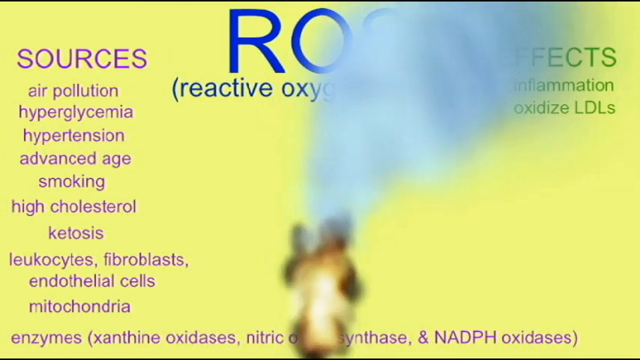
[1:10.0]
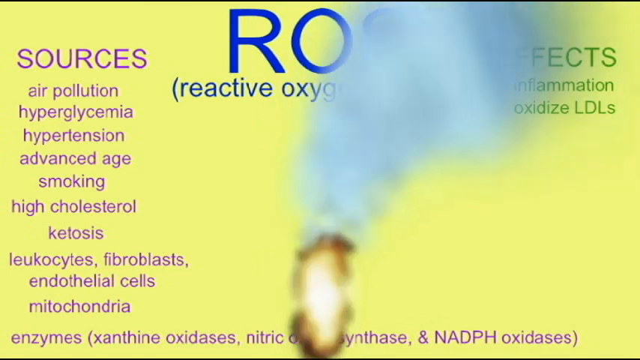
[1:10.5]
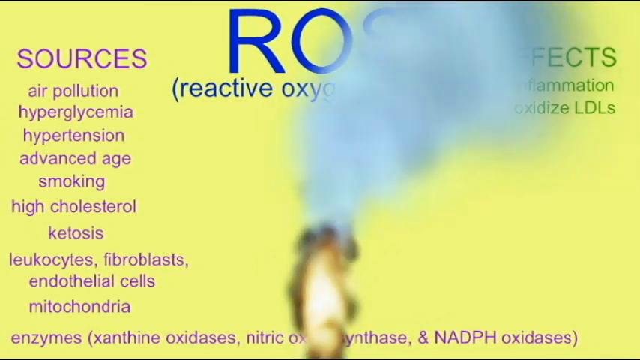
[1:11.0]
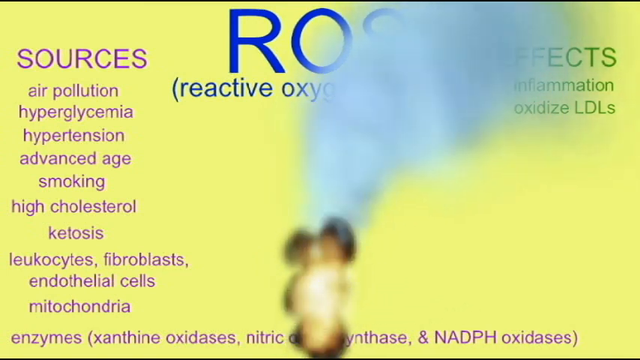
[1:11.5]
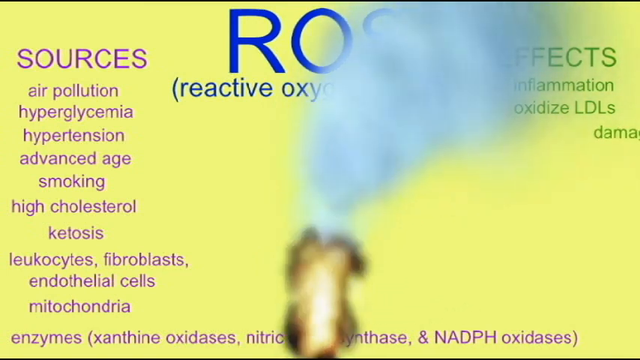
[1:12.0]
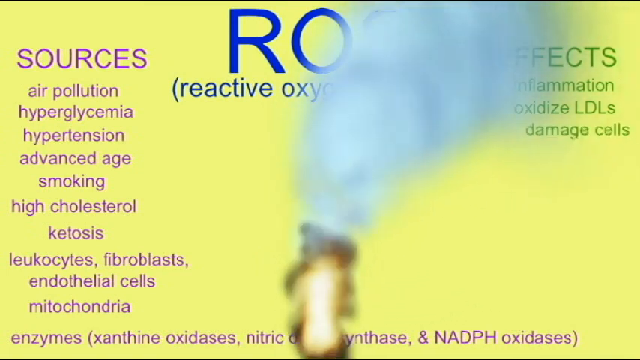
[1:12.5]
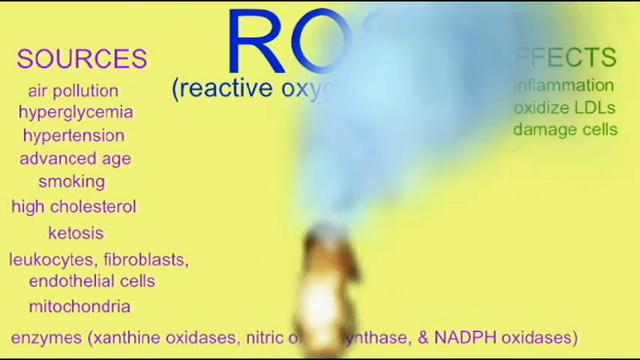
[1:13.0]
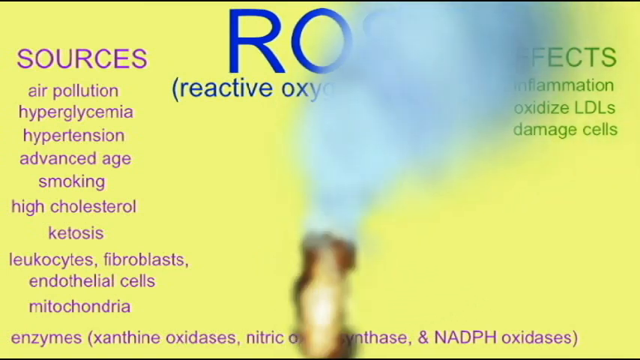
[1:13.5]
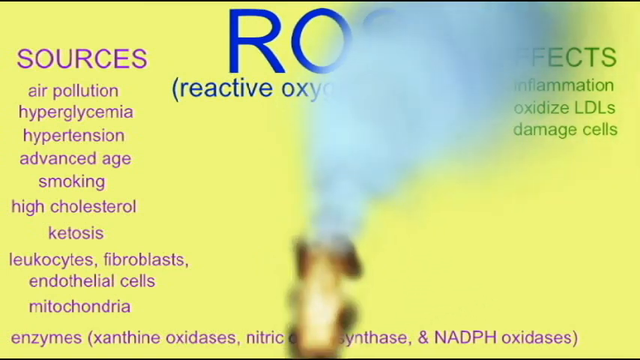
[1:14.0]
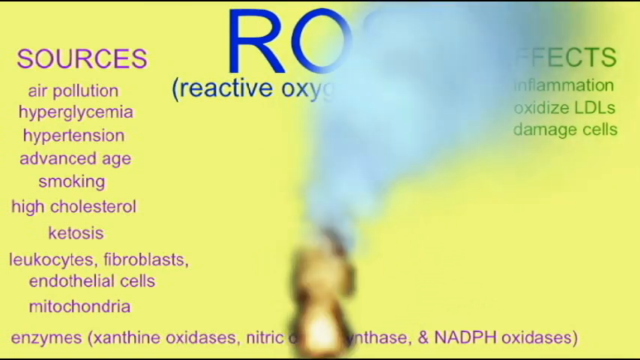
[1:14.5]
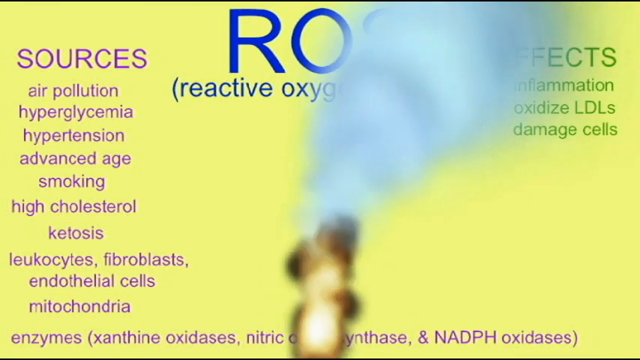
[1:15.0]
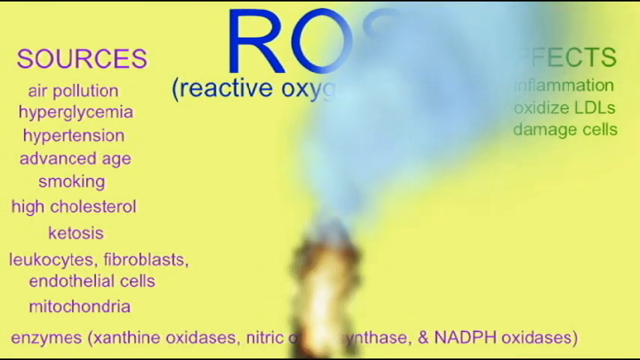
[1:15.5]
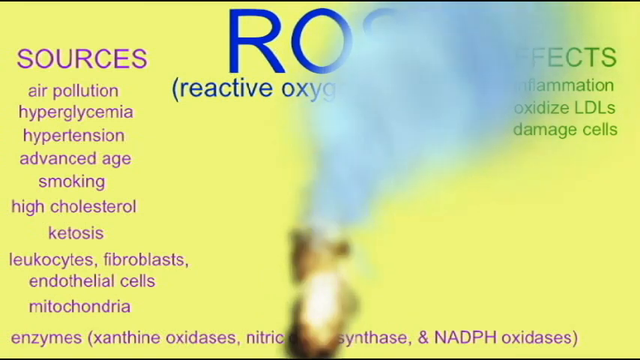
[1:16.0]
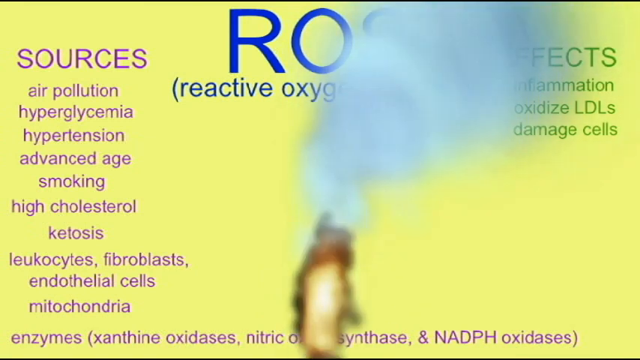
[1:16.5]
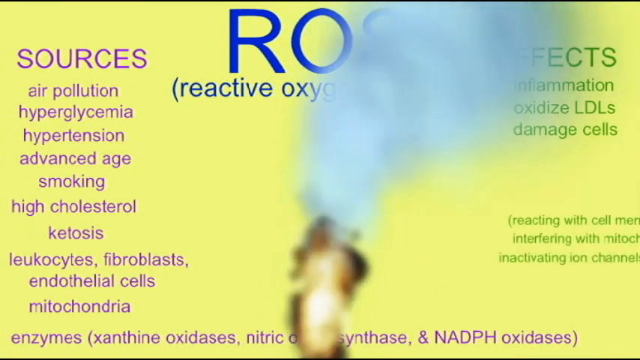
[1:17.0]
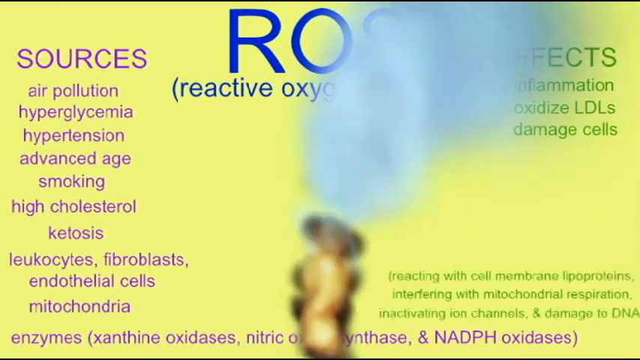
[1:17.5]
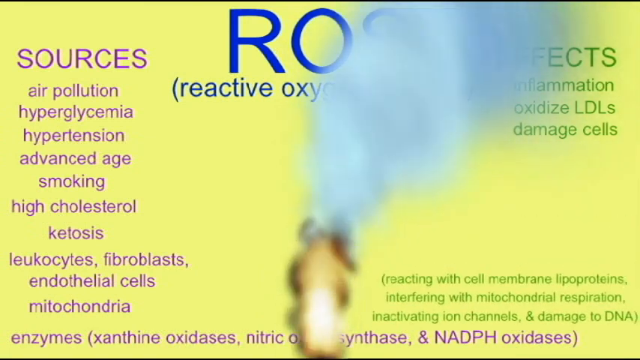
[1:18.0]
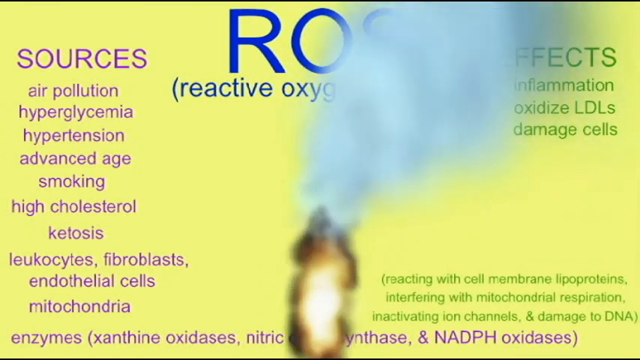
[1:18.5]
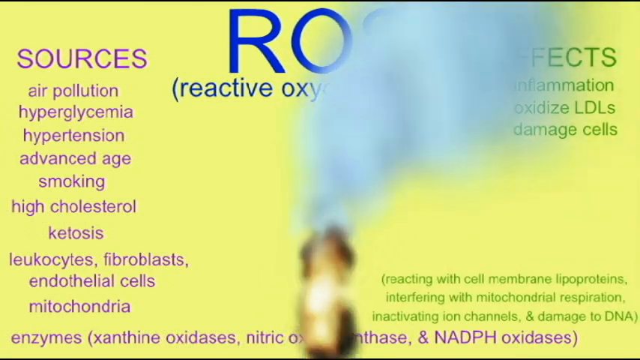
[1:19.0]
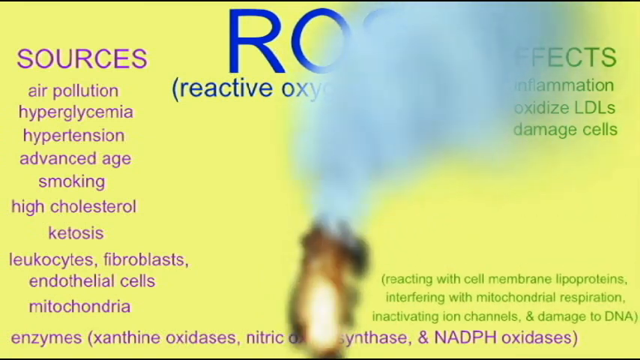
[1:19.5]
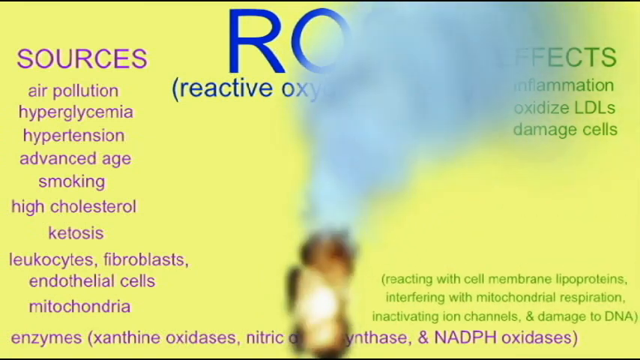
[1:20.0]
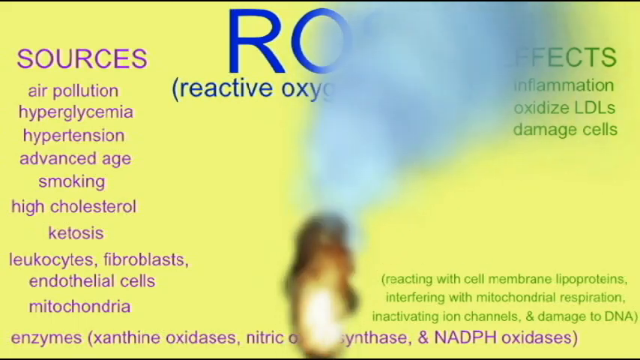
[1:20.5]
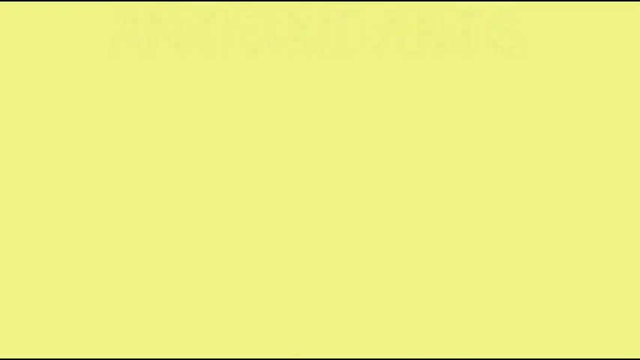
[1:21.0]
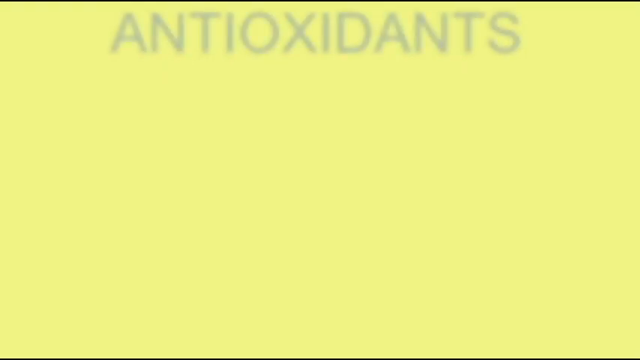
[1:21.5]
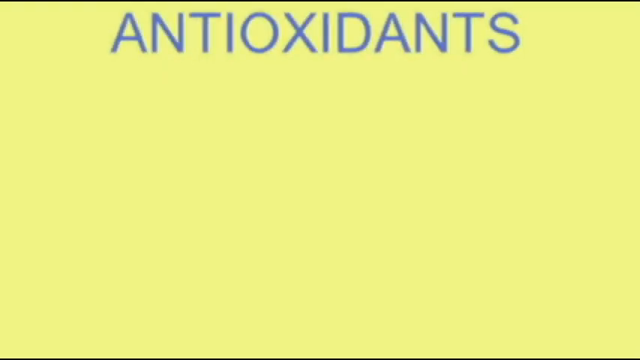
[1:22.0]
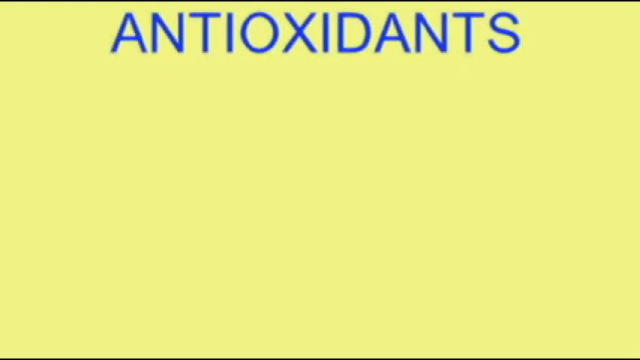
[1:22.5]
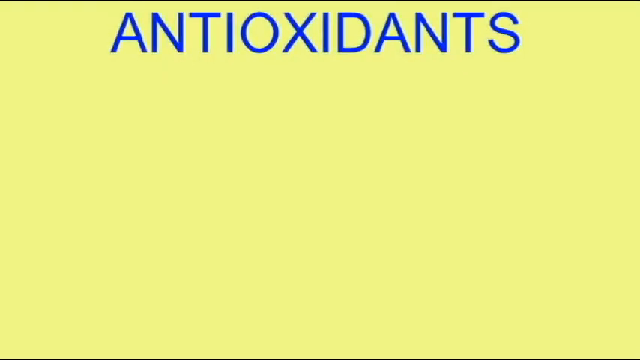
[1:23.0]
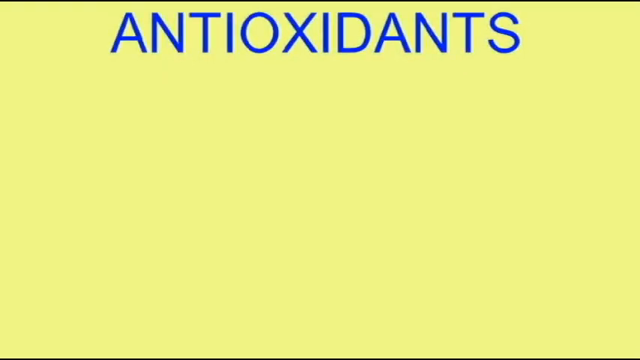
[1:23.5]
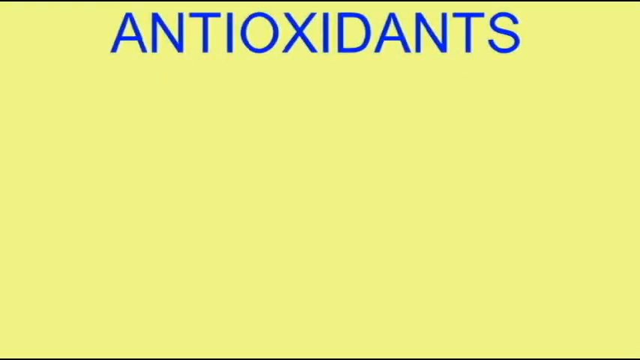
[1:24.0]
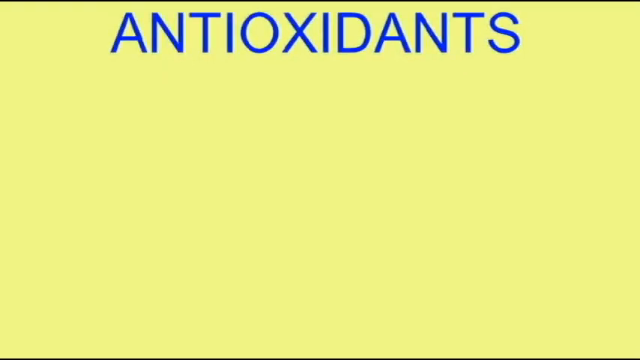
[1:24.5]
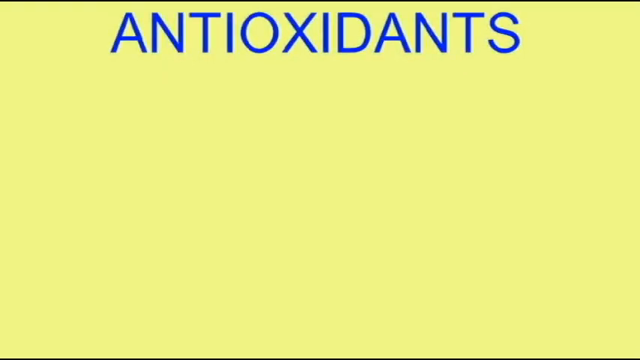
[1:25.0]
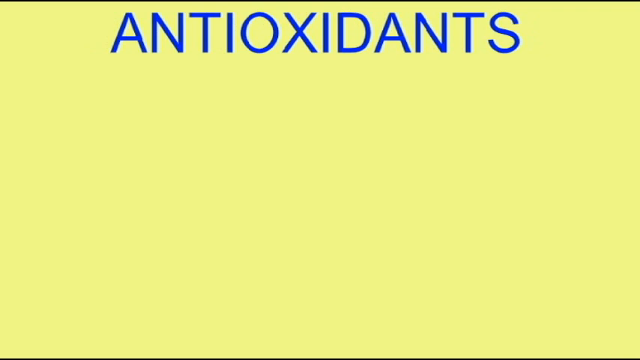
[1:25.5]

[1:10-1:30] A yellow background holds lavender, blue, and green text, with an amber flame burning at the bottom in the middle and a gray stream of smoke billowing upward and to the right. The largest text, at the top in blue, reads "ROS," and a portion of it is hidden behind the smoke; below it, in parentheses, is "reactive oxygen." To the left is purple text: the medium-sized word "Sources," and below it the smallest text reading "air pollution, hyperglycemia, hypertension, advanced age, smoking, high cholesterol, ketosis, leukocytes, fibroblasts, endothelial cells," and "oxidize LDLs," with another word below that sits too low to read. To the right is green text, also behind the plume of smoke, in which the word "effects" can be made out at the top, "inflammation" below it, and "damaged cells" below that. The video then transitions to a yellow screen with the word "antioxidants" at the top.